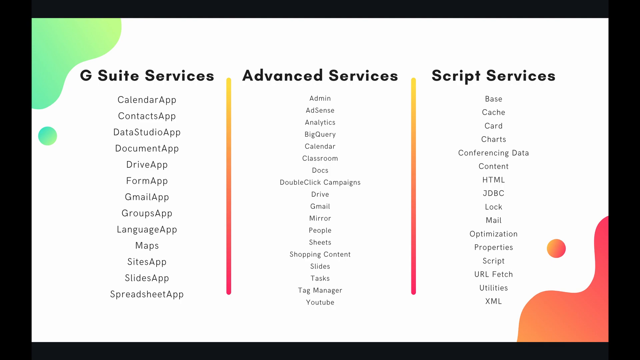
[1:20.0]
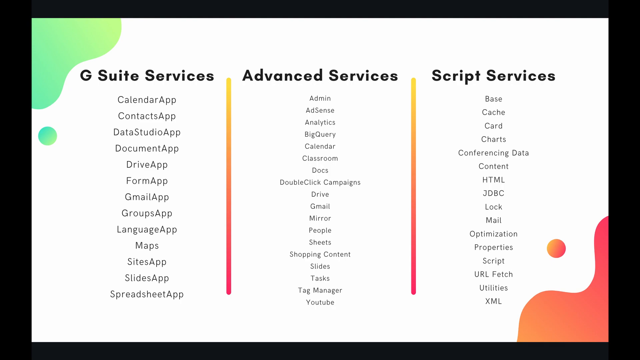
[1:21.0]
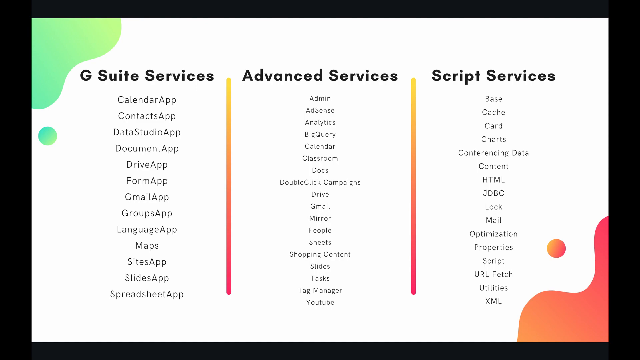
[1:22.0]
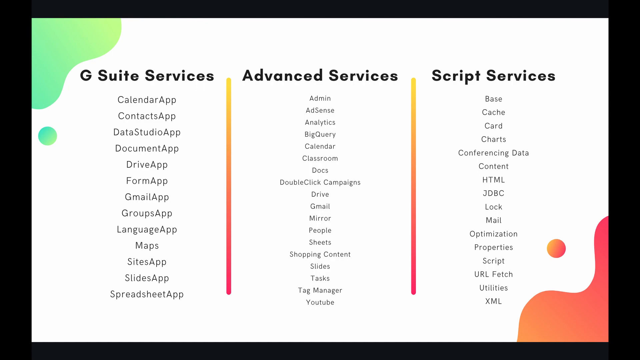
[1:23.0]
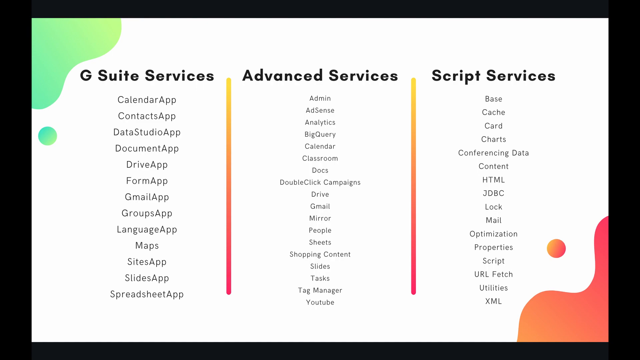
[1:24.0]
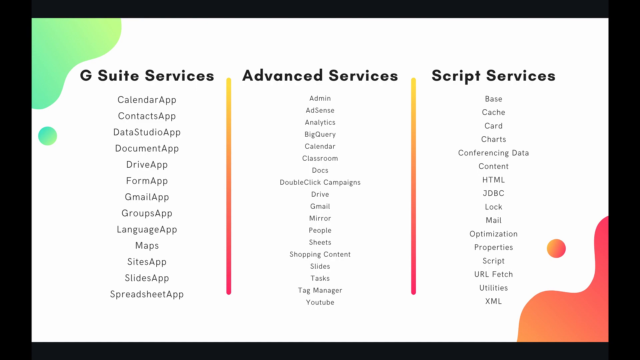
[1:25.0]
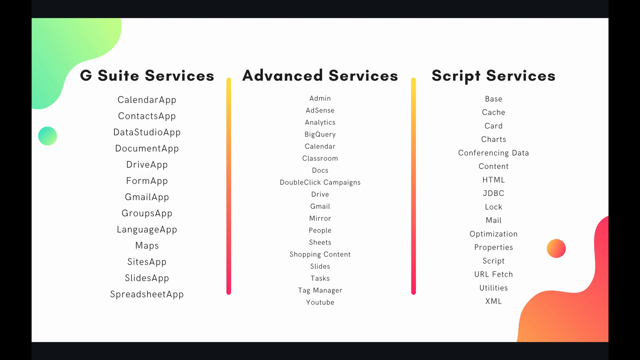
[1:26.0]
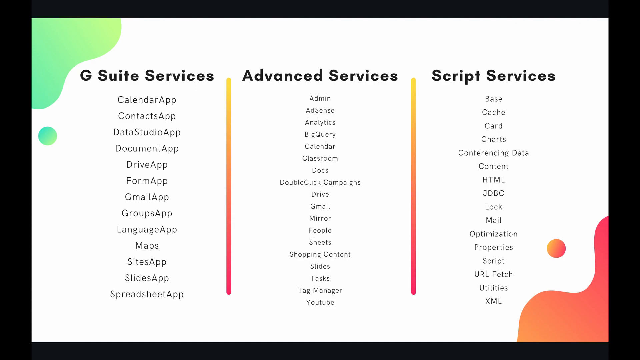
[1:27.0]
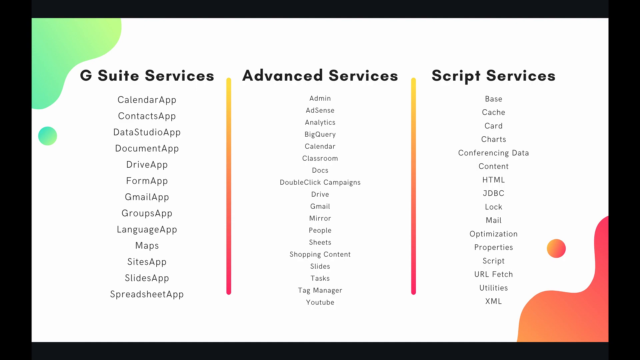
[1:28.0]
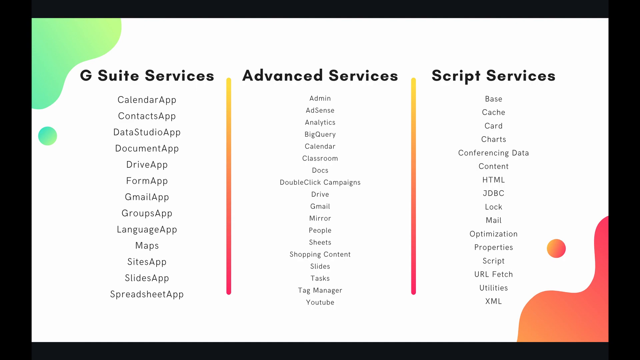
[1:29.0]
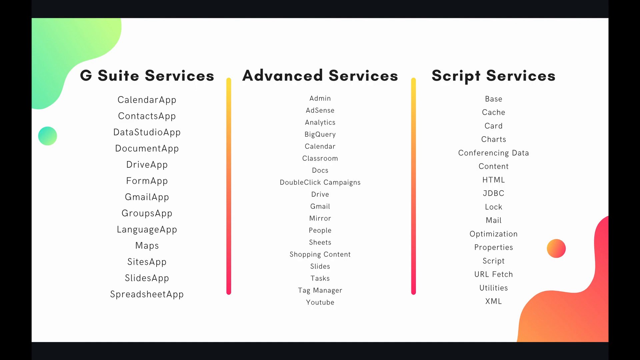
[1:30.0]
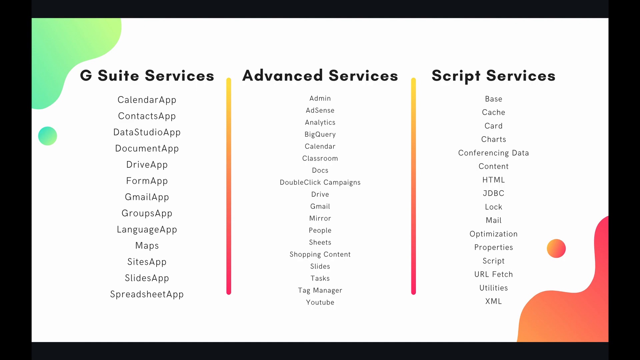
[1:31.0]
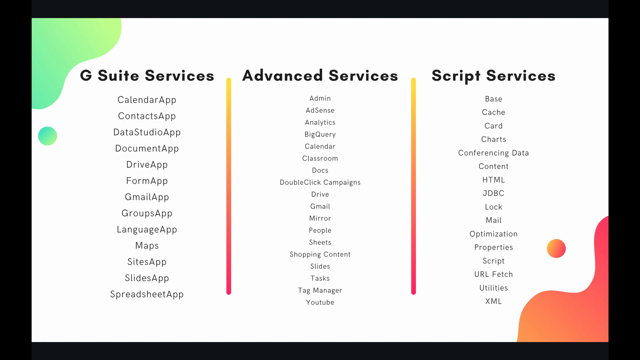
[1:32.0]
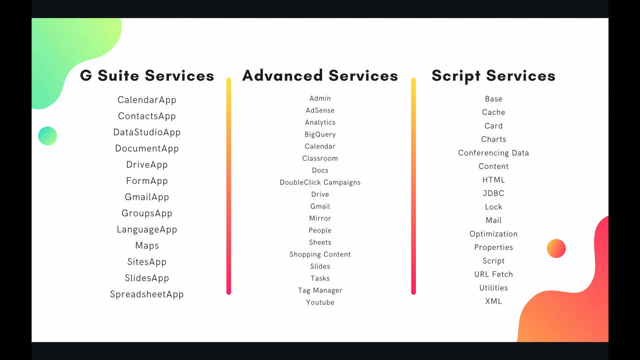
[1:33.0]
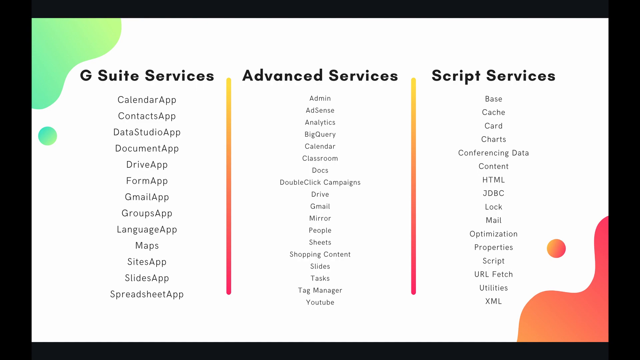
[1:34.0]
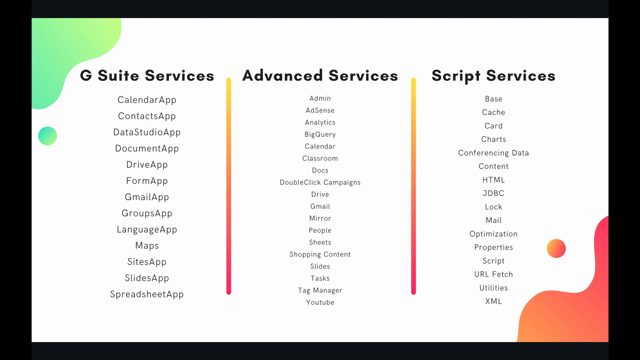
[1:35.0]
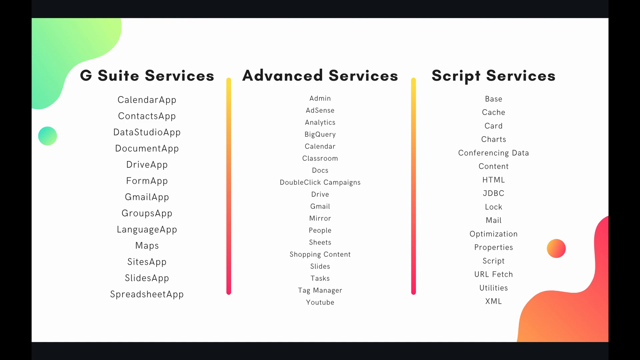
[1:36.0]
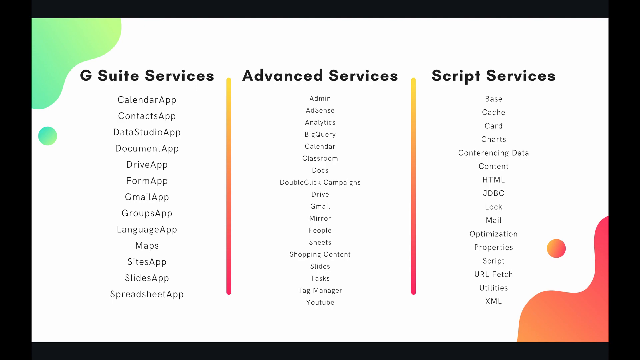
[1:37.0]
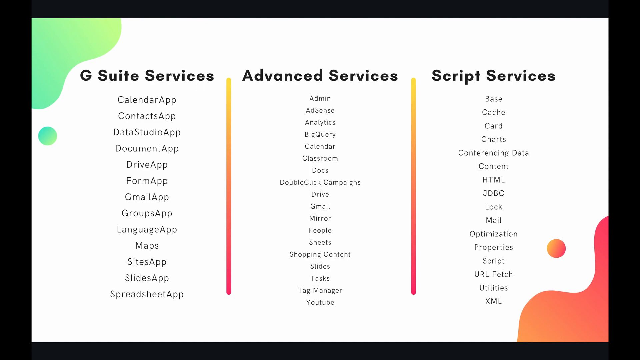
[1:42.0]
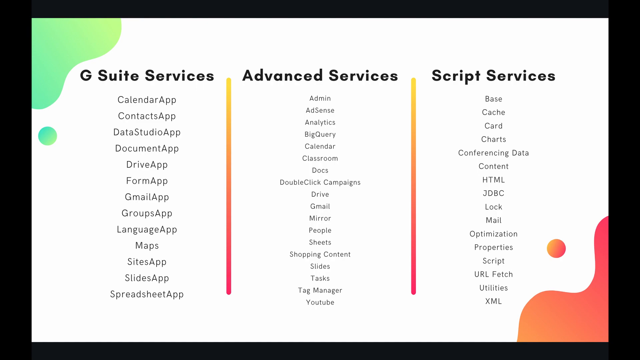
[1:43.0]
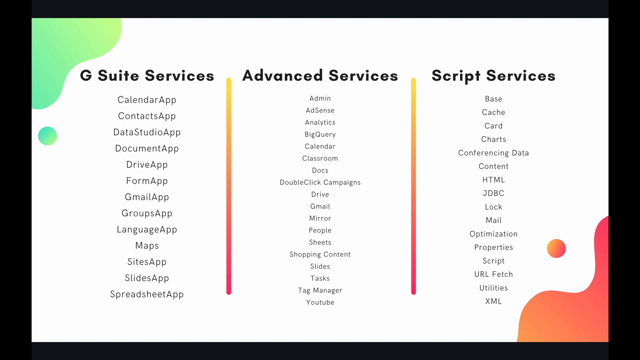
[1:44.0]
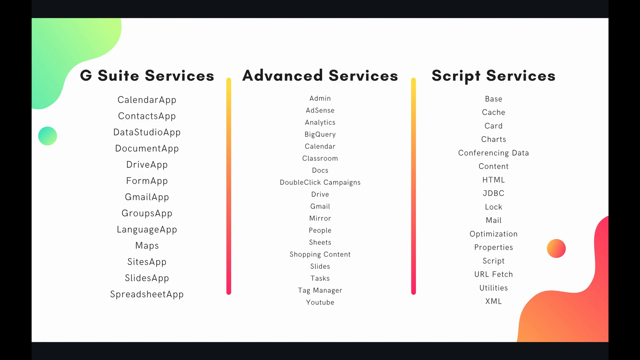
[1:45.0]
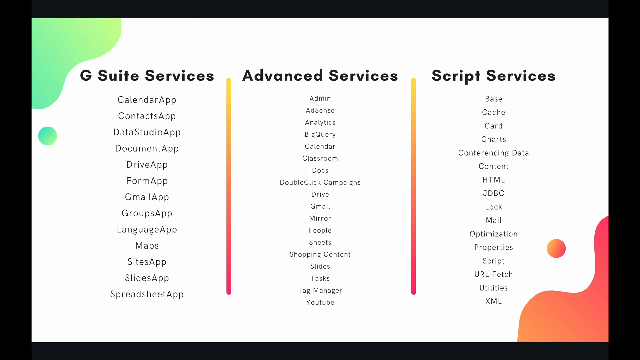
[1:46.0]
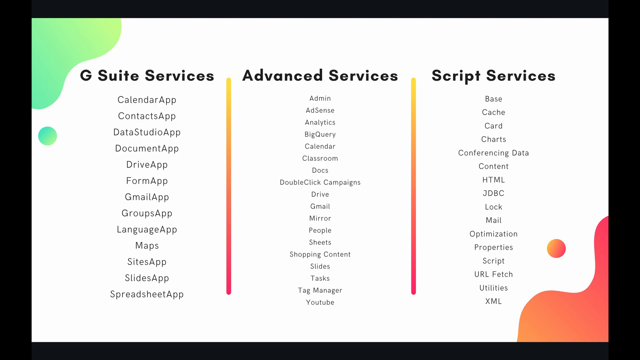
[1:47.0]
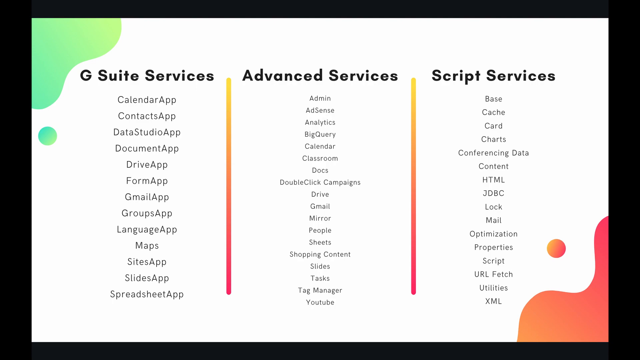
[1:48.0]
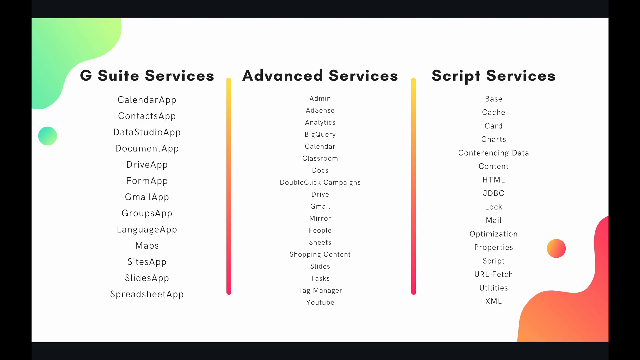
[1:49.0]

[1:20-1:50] One slide stays on screen the whole time. Its background is mostly white. In the top left is an aqua green blob with an aqua green circle underneath it. In the lower right corner is a reddish-orange blob with a reddish-orange circle to its left and above it. Each blob has kind of an indentation in the middle, so the blobs look like two small hills. Three columns are in the center of the screen, with bolded titles: "G Suite Services" on the left, "Advanced Services" in the middle, and "Script Services" on the right. Between each column is a vertical divider line, yellow at the top and more red going down. Under G Suite Services is a list of apps: Calendar app, Contacts app, Data Studio app, Document app, Drive app, Form app, Gmail app, Groups app, Language app, Maps, Sites app, Slides app, Spreadsheet app. Under Advanced Services are Admin, AdSense, Analytics, BigQuery, Calendar, Classroom, Docs, DoubleClick Campaigns, Drive, Gmail, Mirror, People, Sheets, Shopping Content, Slides, Tasks, Tag Manager, YouTube. Under Script Services are Base, Cache, Card, Chart, Conferencing Data, Content, HTML, JDBC, Blob, Mail, Optimization, Property, Script, URL Fetch, Utilities, and XML.